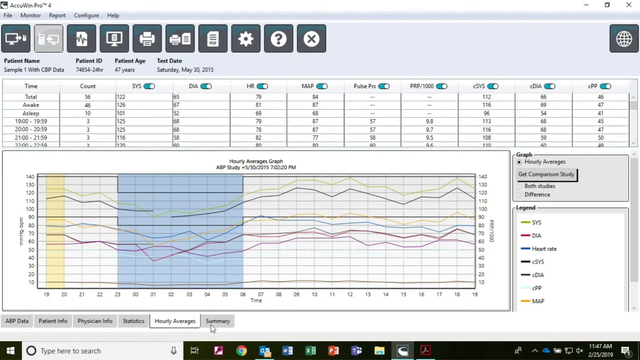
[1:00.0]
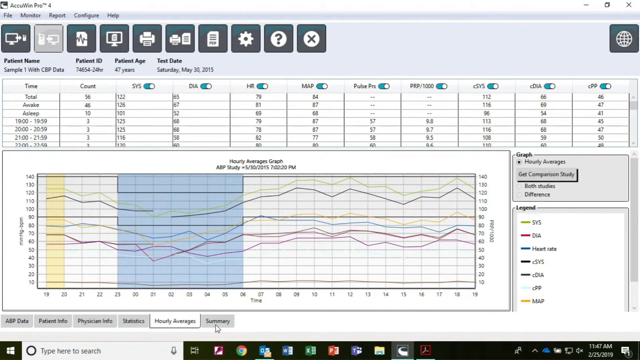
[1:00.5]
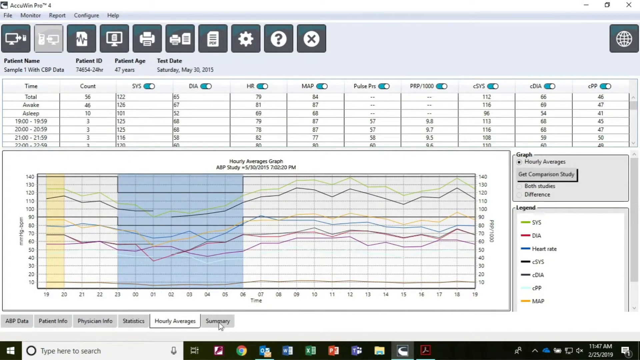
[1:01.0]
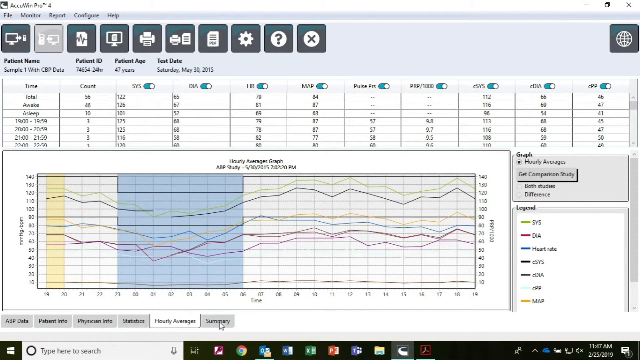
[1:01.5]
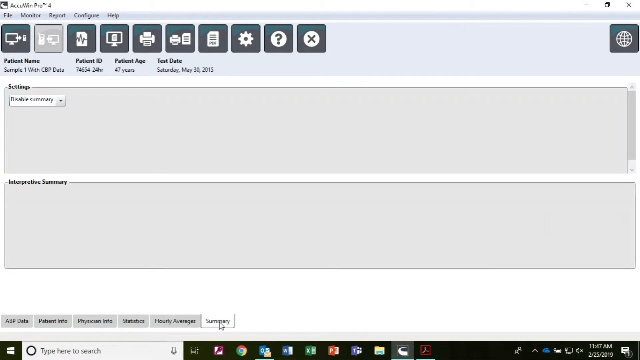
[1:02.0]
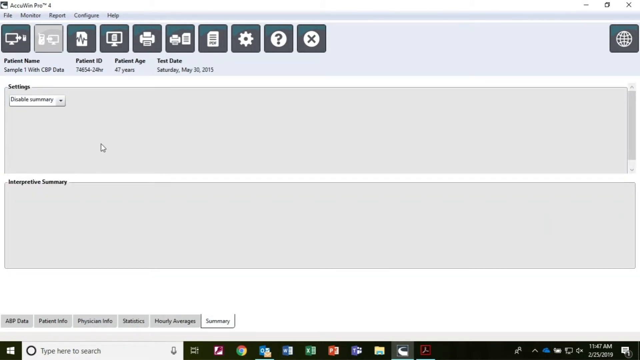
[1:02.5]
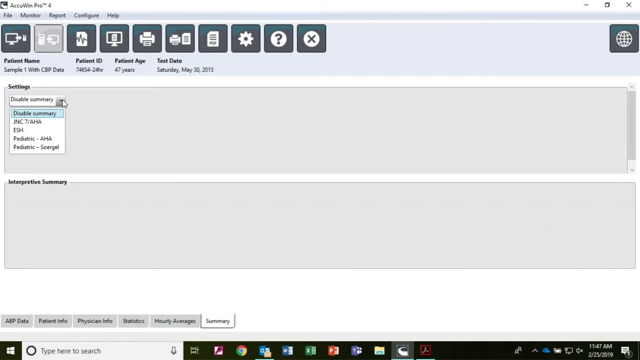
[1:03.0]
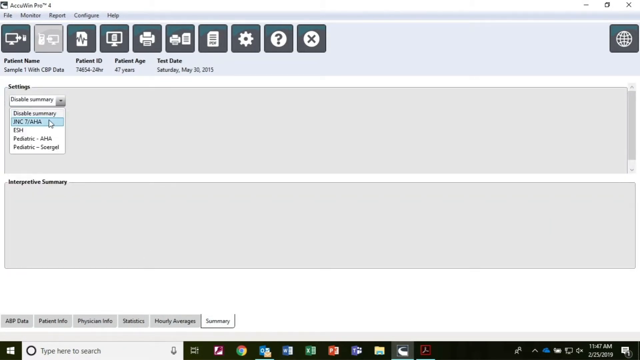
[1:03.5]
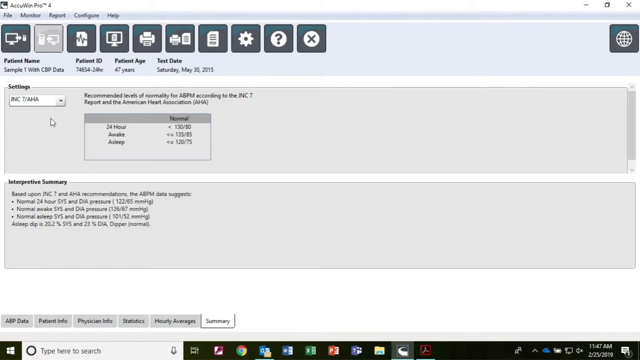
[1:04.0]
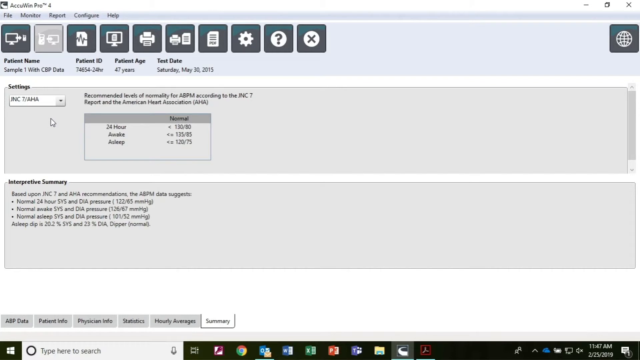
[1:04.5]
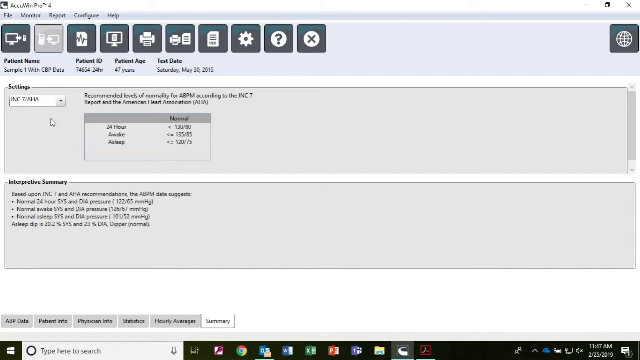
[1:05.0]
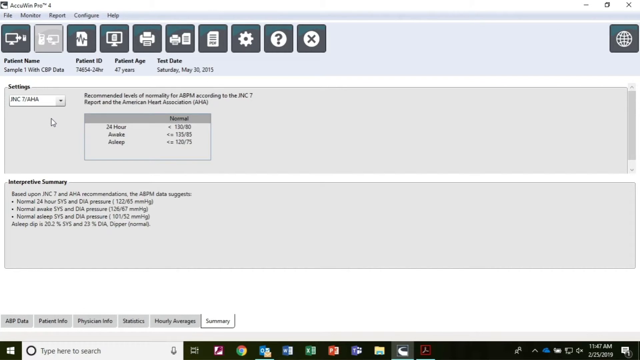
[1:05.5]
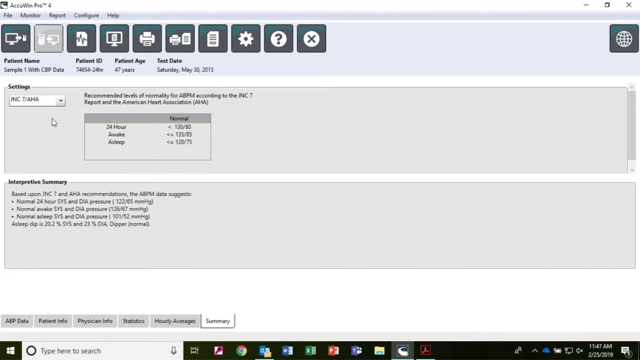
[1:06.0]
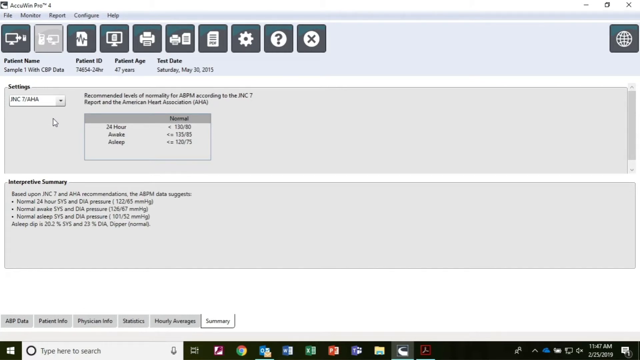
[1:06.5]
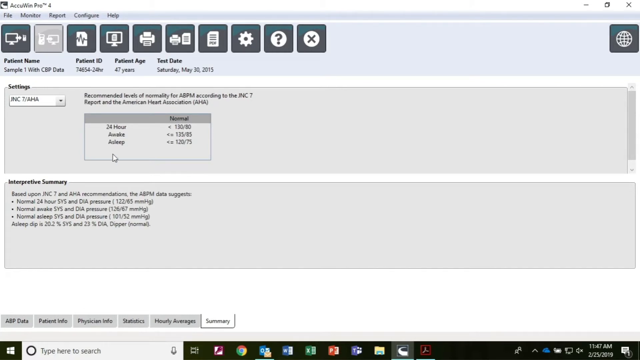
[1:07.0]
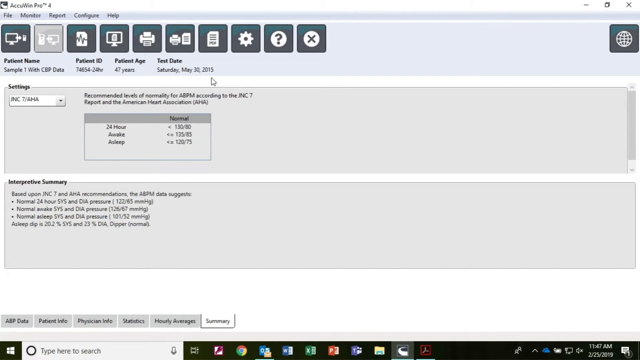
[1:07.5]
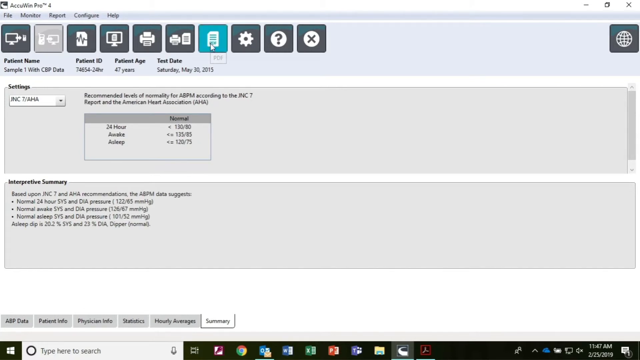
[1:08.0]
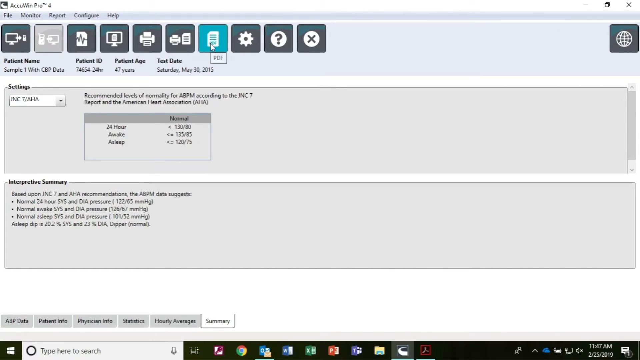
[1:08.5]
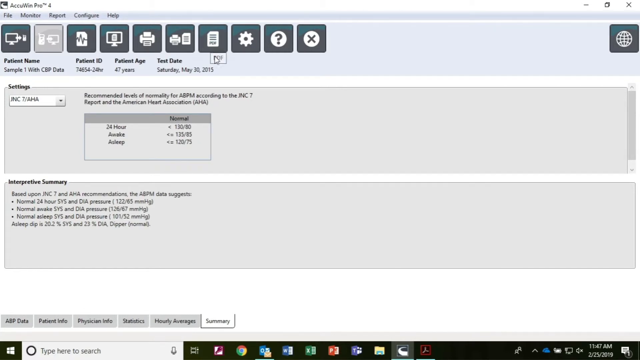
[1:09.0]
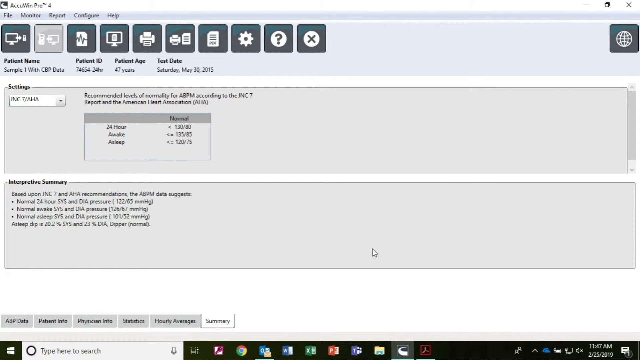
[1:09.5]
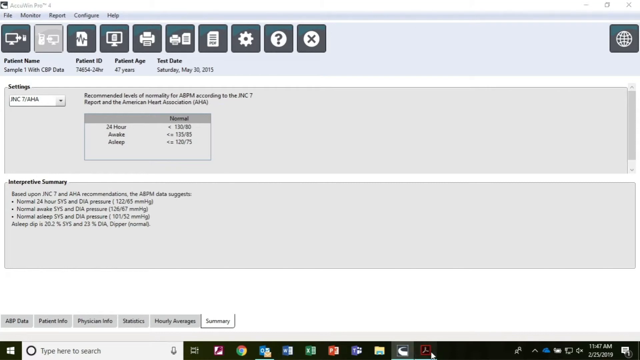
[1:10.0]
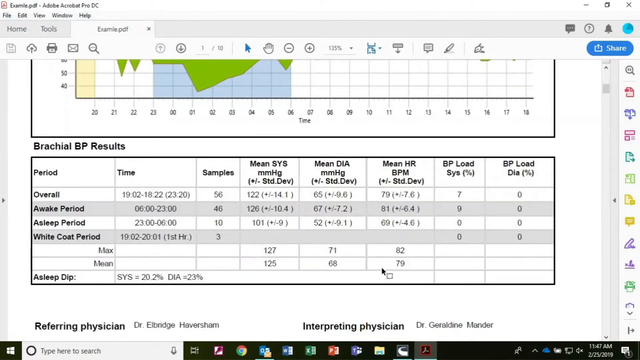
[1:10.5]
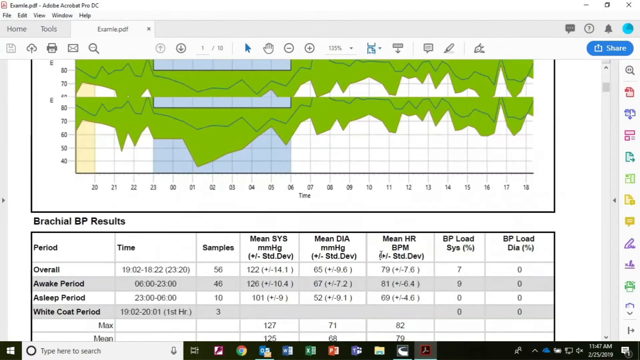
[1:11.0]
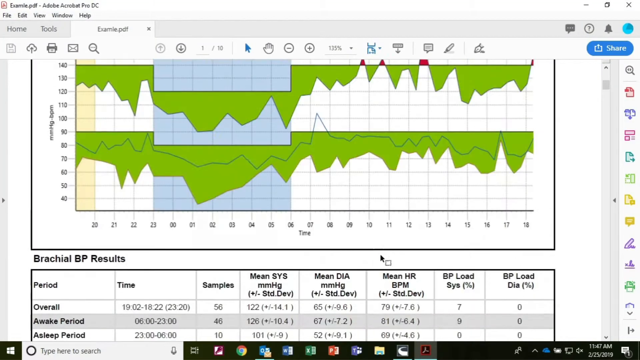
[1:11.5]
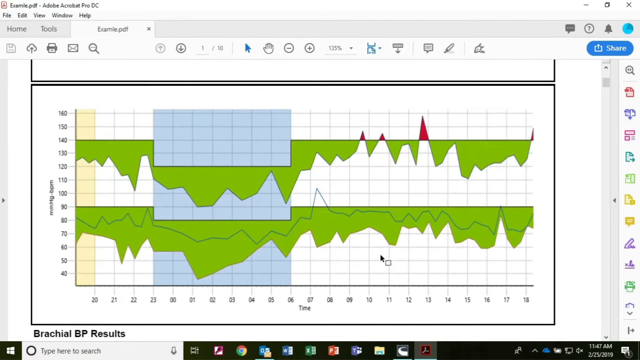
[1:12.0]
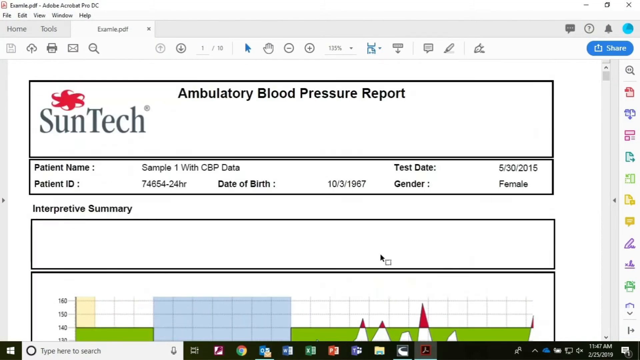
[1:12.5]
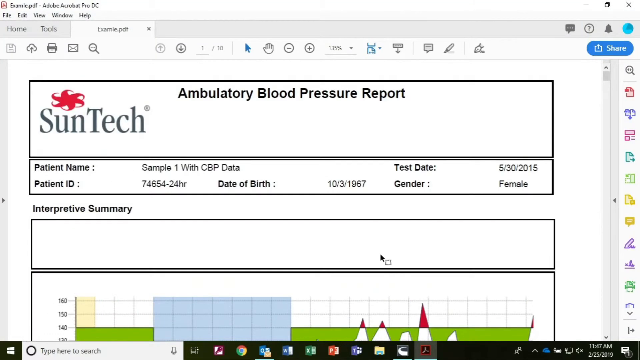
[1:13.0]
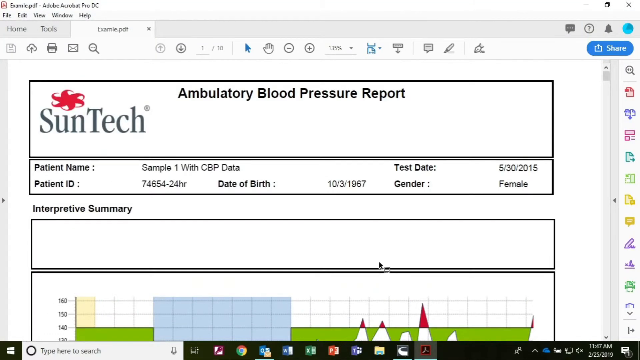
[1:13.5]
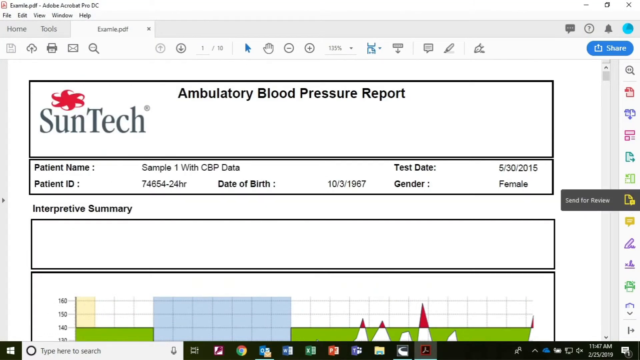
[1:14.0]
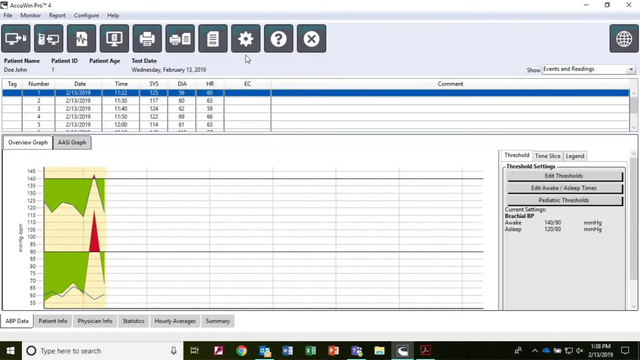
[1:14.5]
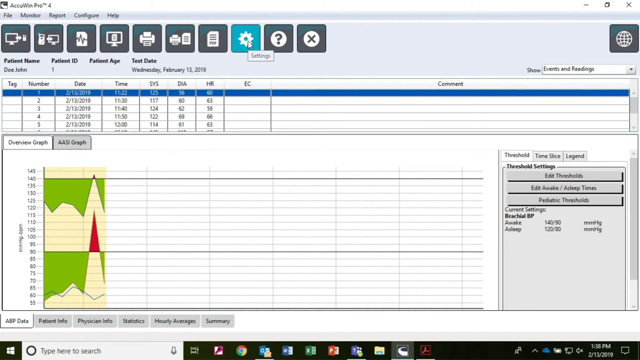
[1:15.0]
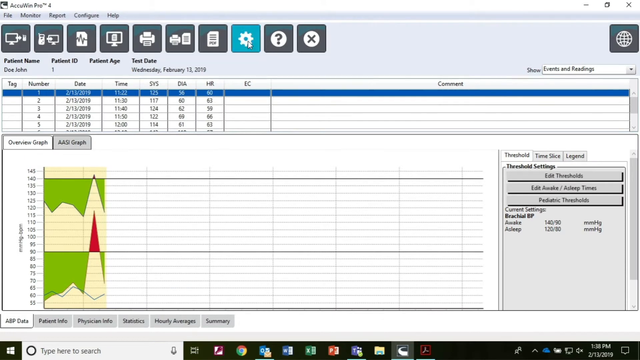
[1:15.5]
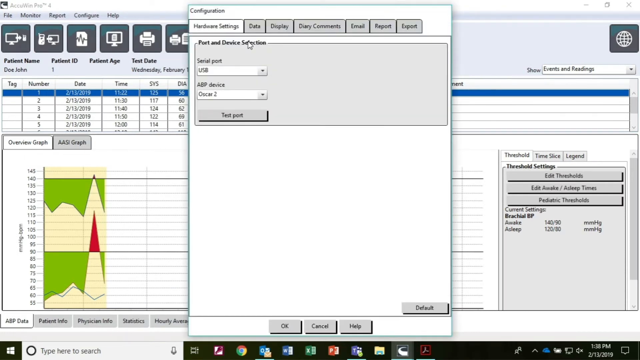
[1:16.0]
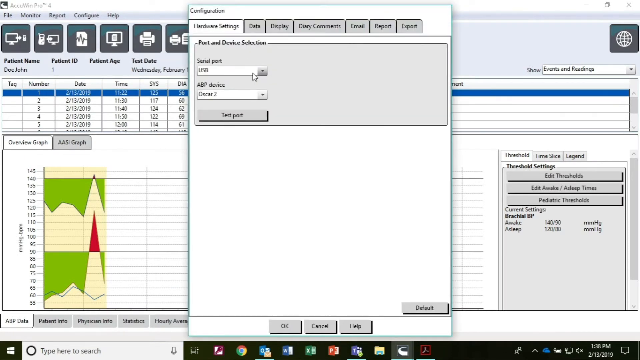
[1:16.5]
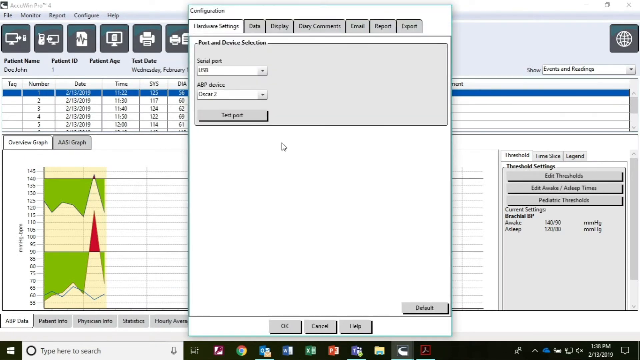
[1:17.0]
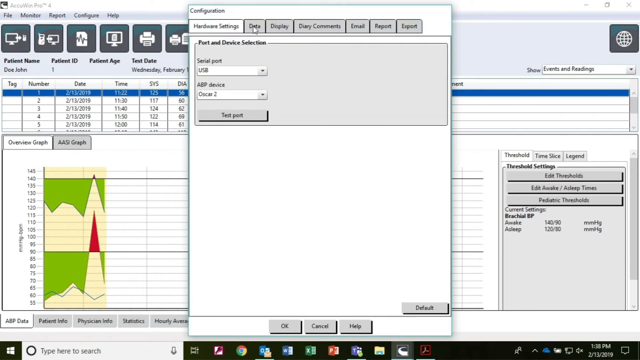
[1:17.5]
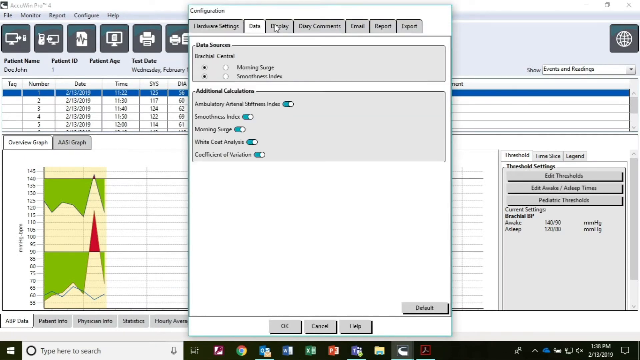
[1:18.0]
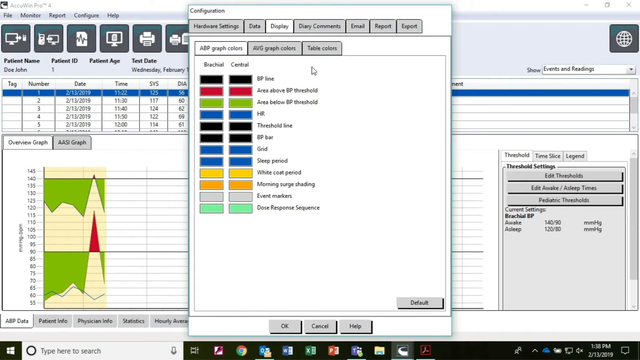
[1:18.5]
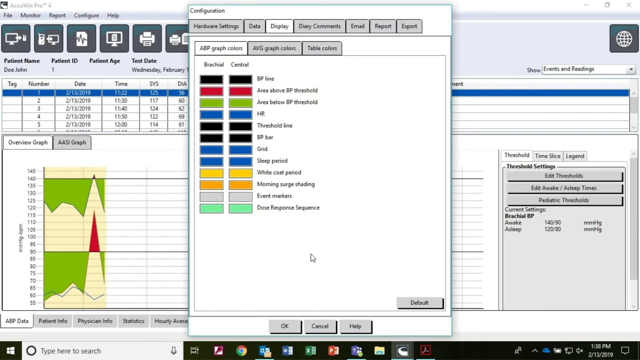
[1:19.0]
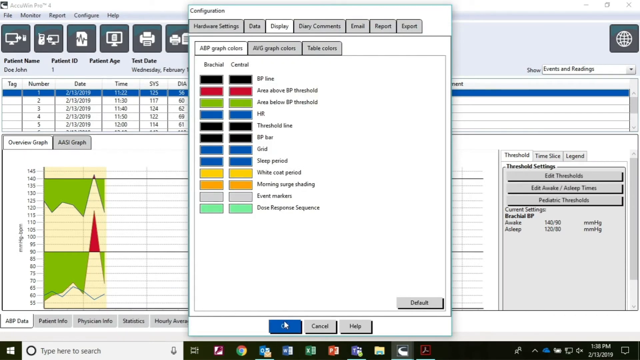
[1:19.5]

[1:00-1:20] A graph in the application is on what seems to be the summaries tab. The graph has a bunch of lines in green, red, blue, and black; the red line looks like it means DNA and the blue line means heart rate. On the summaries page there appear to be settings to choose options like past 24 hours and what looks like annually or average. Other options then come up, and the user pulls up a PDF version, which gives an overview of everything on the report, with what looks like an option to print it. Next they go to a settings page for the display, with multiple colors for changing what the bars and lines look like, but they do not make any changes there.